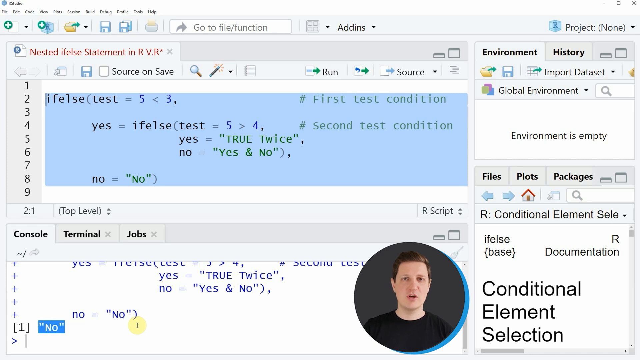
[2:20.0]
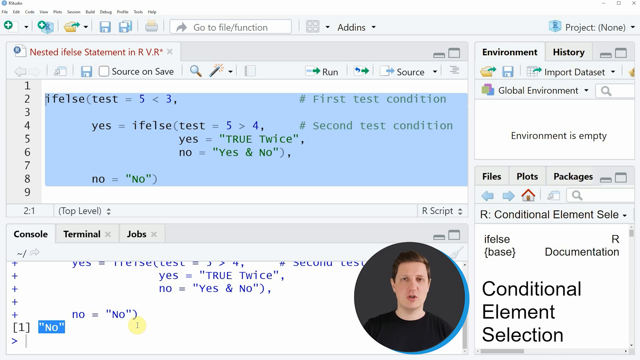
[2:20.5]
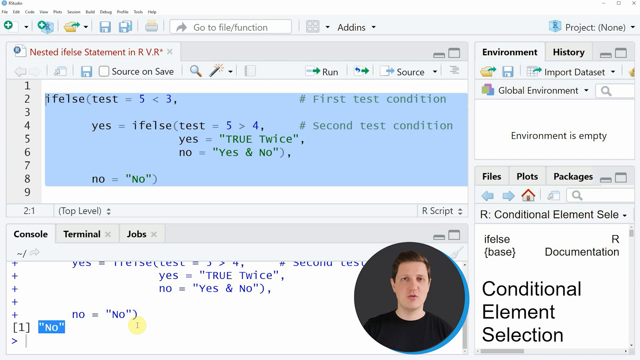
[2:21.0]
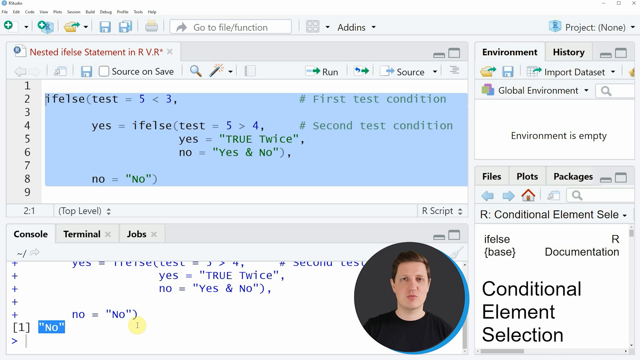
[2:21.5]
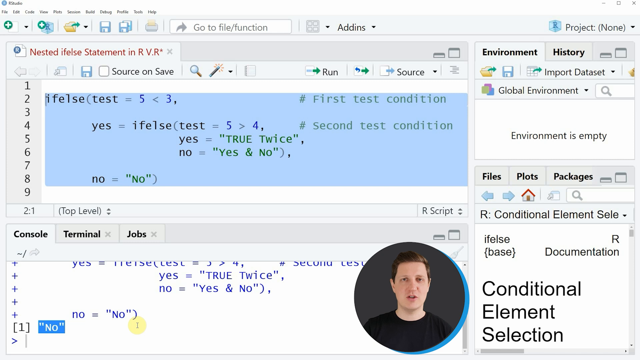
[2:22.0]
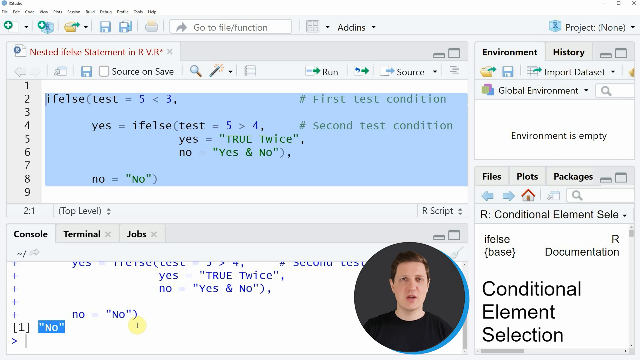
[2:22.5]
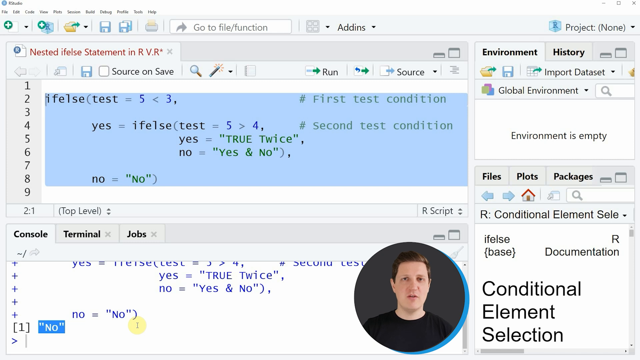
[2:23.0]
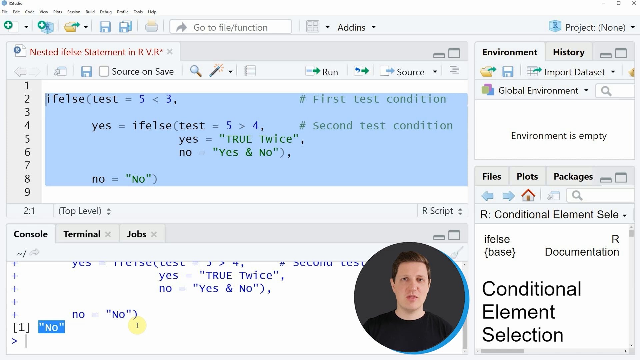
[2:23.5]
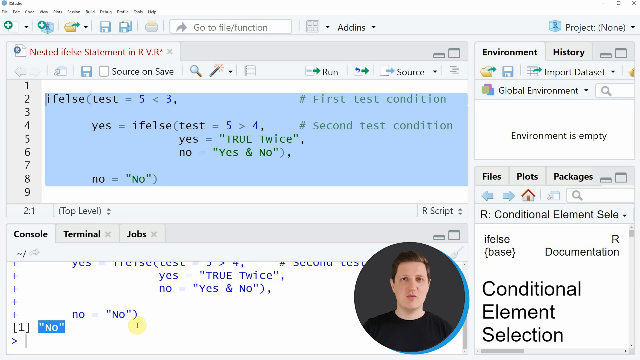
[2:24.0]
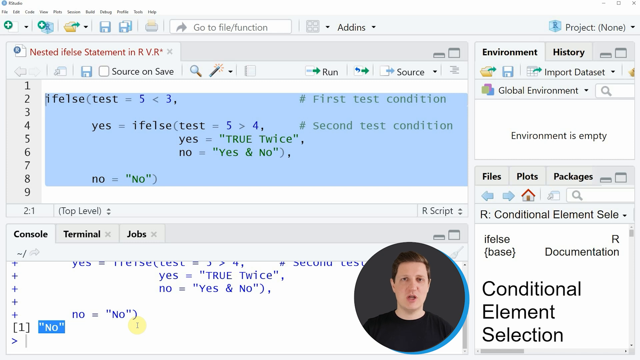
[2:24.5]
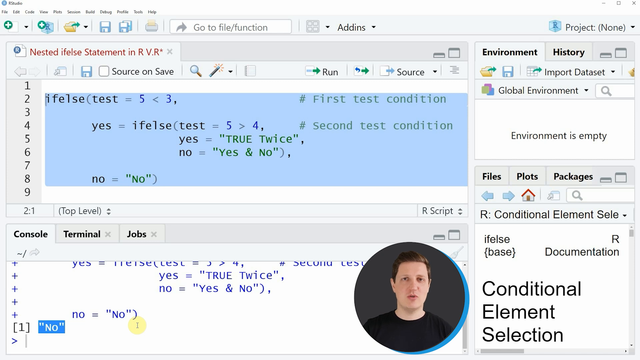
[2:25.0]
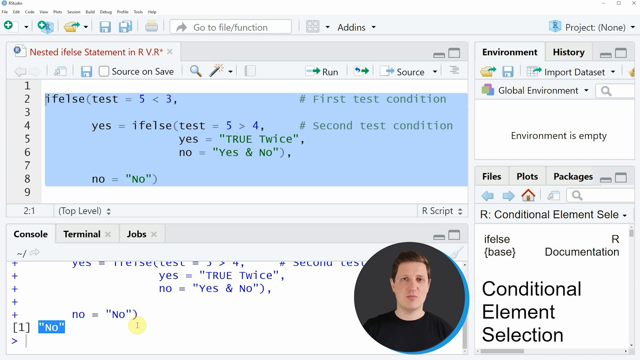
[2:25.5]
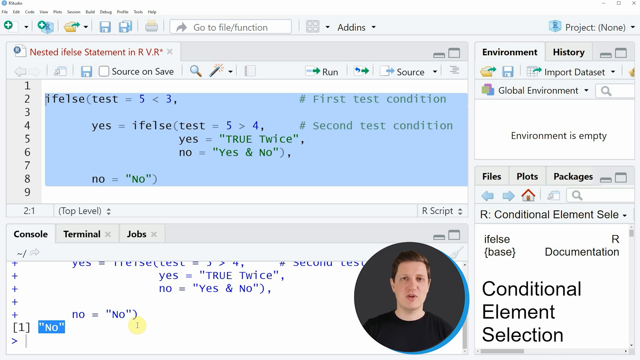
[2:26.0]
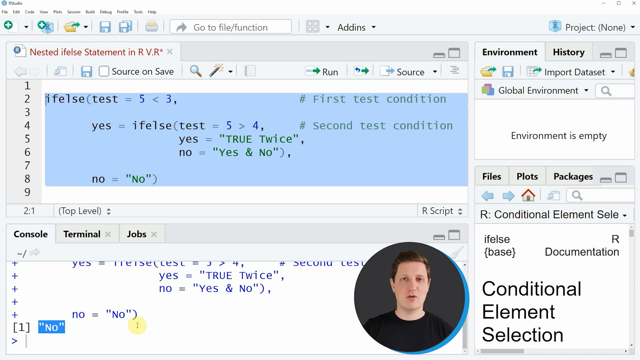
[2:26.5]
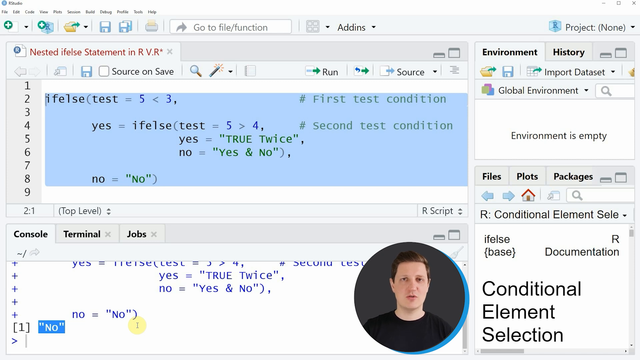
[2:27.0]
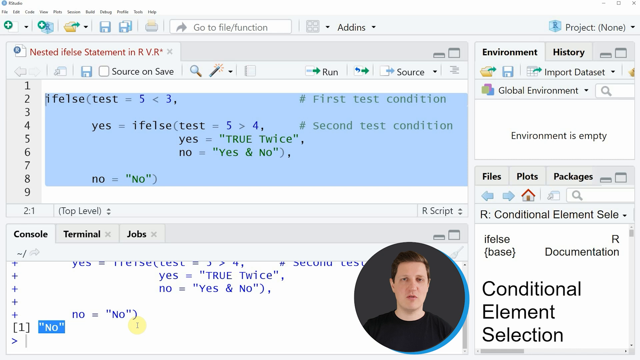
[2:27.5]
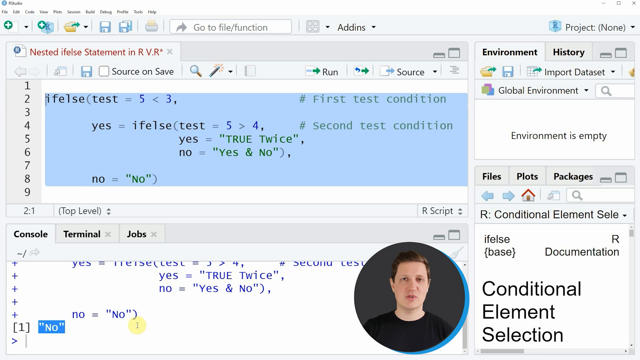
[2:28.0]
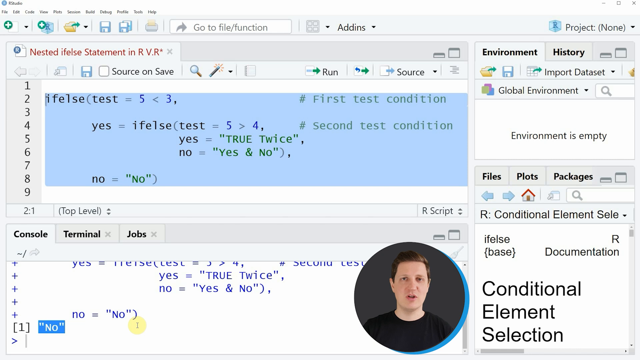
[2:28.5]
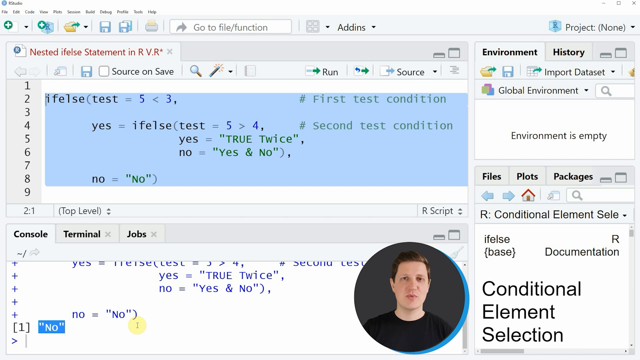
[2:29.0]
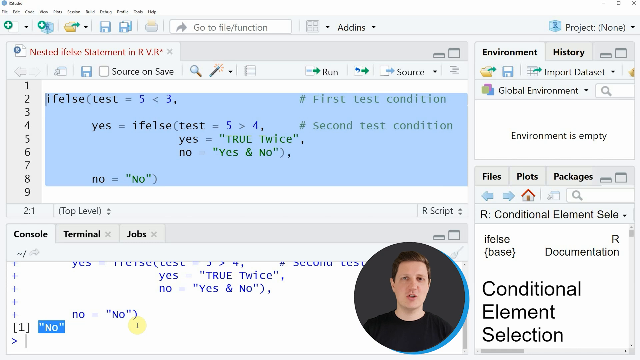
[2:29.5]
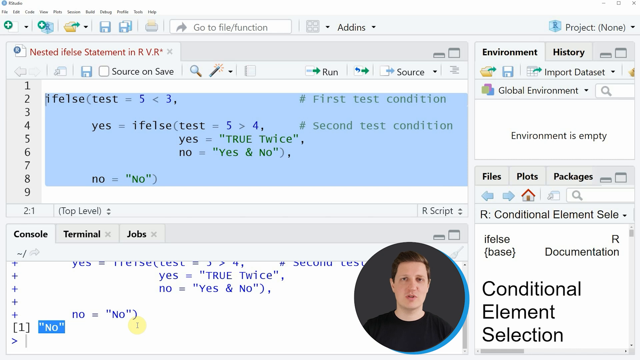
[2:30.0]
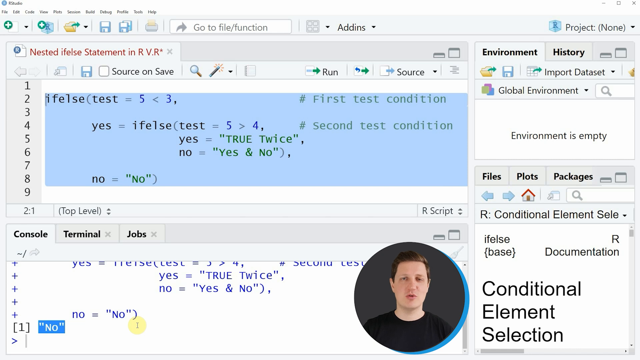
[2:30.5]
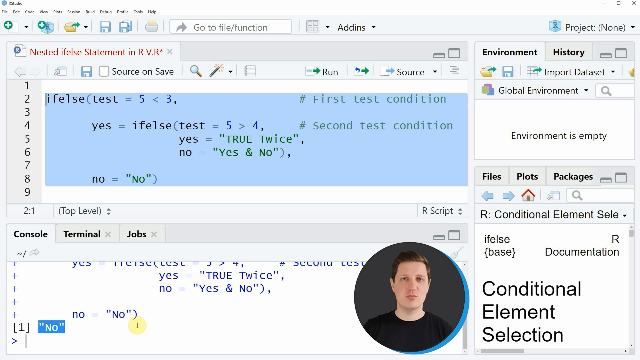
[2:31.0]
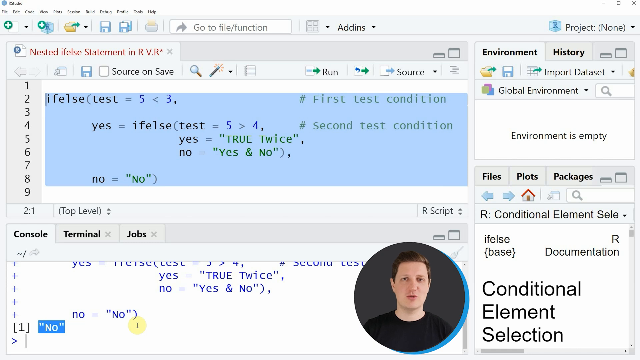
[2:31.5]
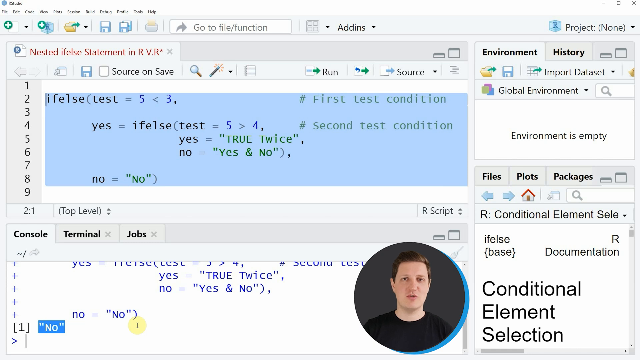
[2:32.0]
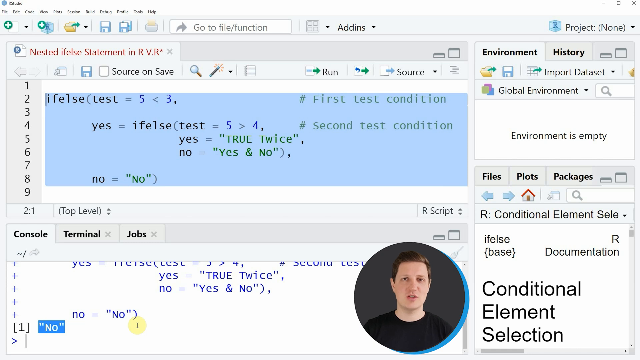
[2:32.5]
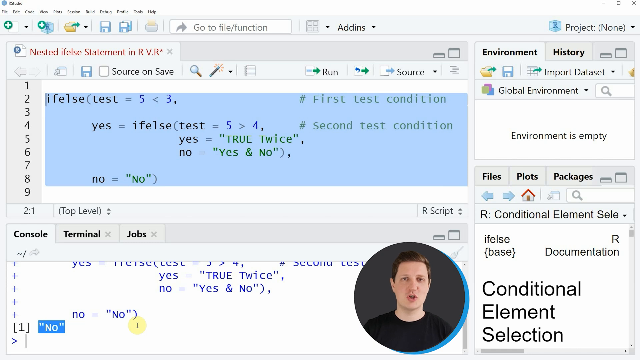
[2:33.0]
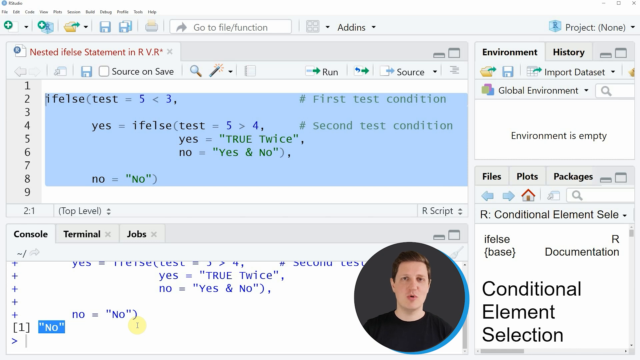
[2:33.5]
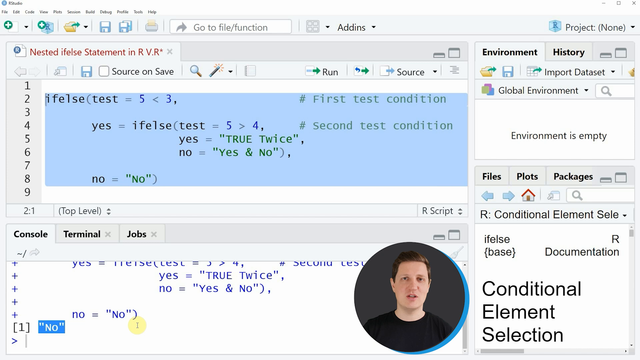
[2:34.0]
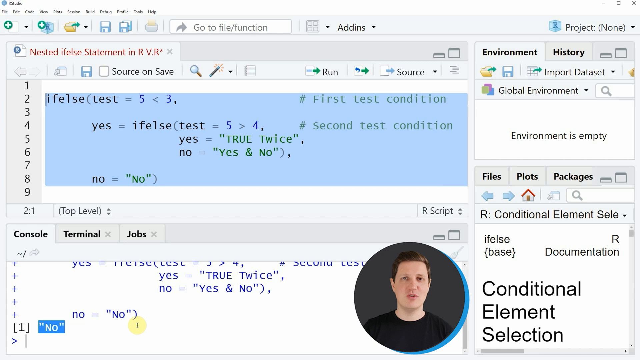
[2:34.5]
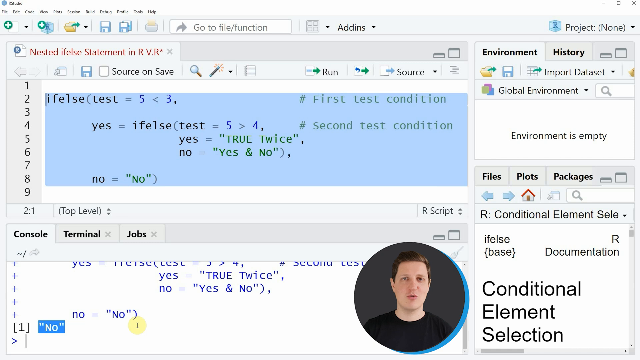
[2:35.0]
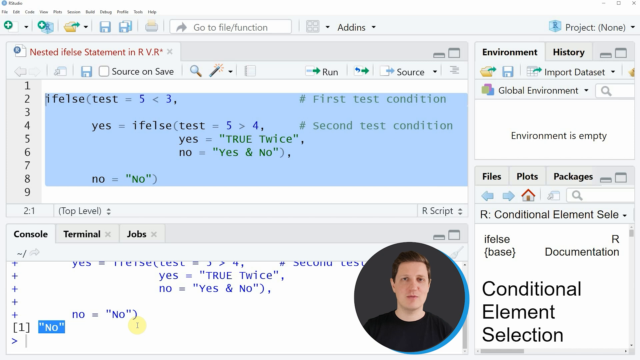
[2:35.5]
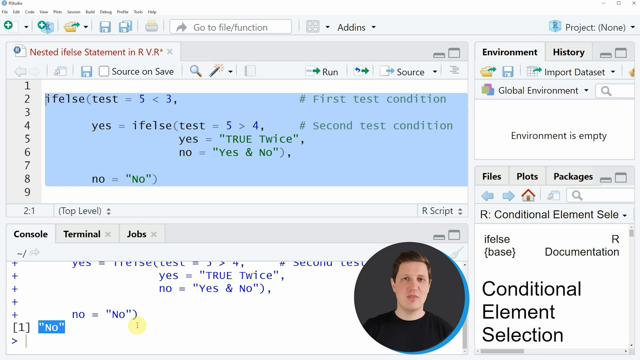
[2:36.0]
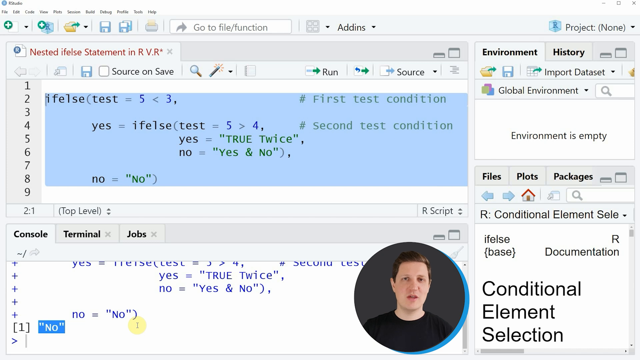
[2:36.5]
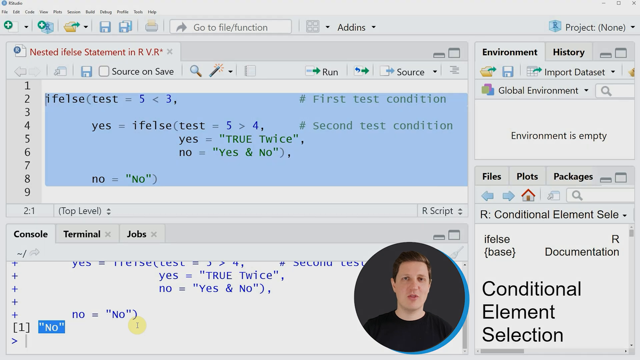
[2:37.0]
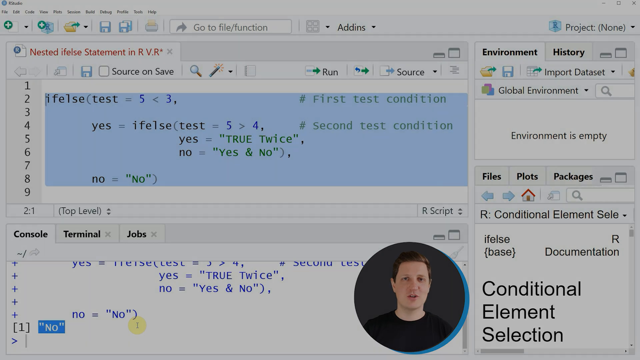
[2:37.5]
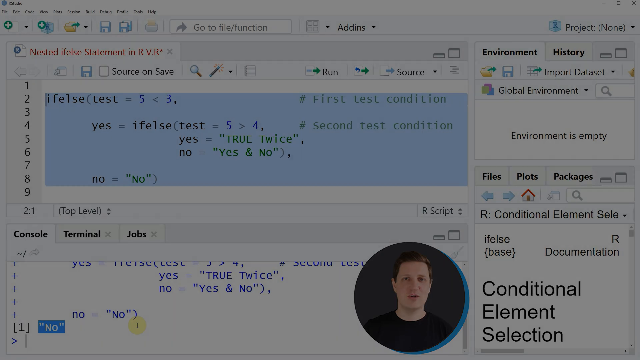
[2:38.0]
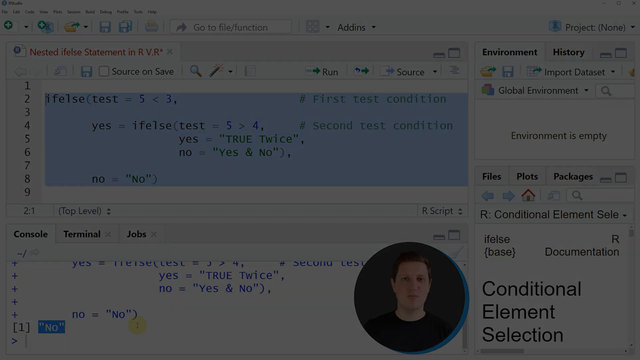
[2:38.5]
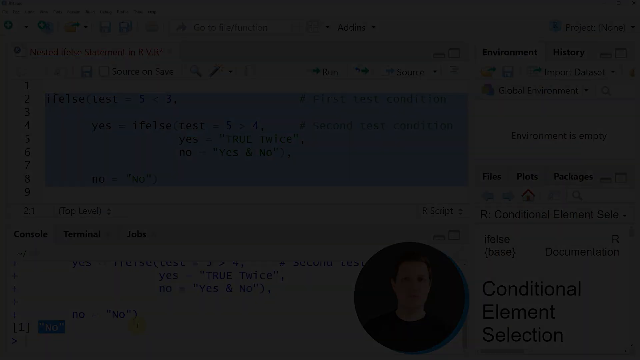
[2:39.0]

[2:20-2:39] The window with four panels is open. In the top left nested ifelse statement in R VR panel, lines 2 through 8 are highlighted in light blue. Underneath, in the bottom left panel, the console tab is open, and on the very last line the text "No" in parentheses is selected and highlighted in blue. Toward the bottom center, a little off to the right, a smaller circle frame shows a video of the man from his chest to his head: a white man with light brown hair wearing a black shirt. He is speaking, seeming pretty emotionless, almost AI-like, and seems to be wrapping up the video.